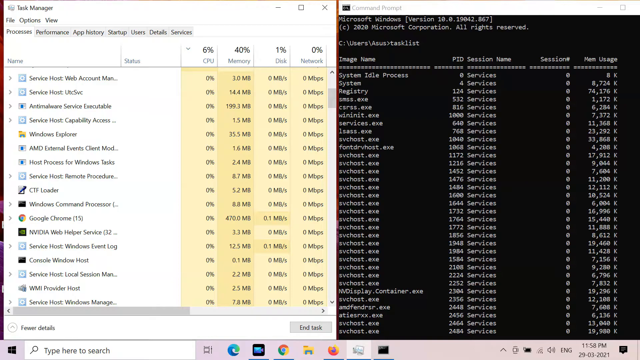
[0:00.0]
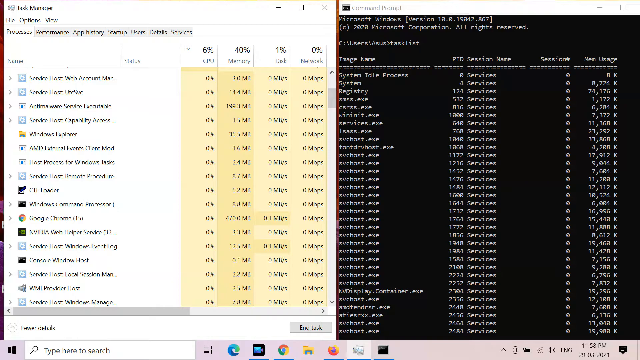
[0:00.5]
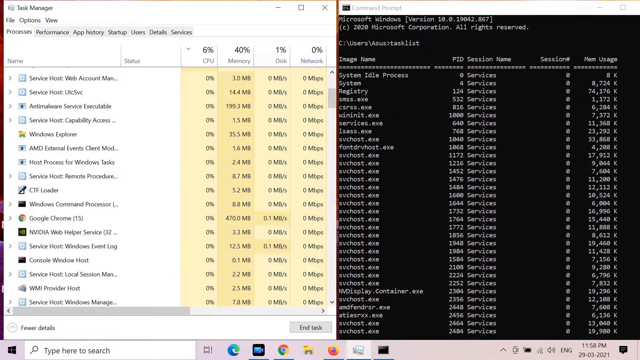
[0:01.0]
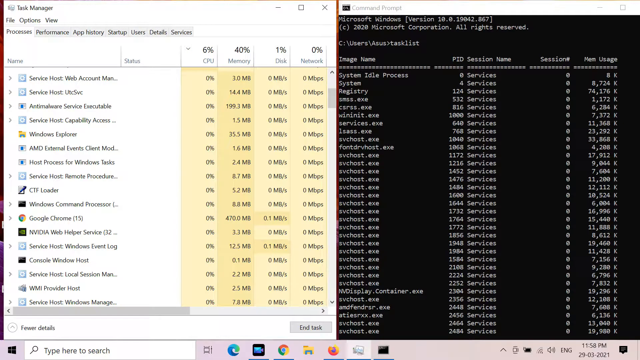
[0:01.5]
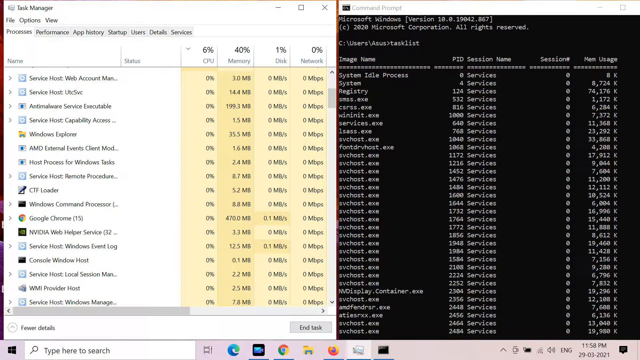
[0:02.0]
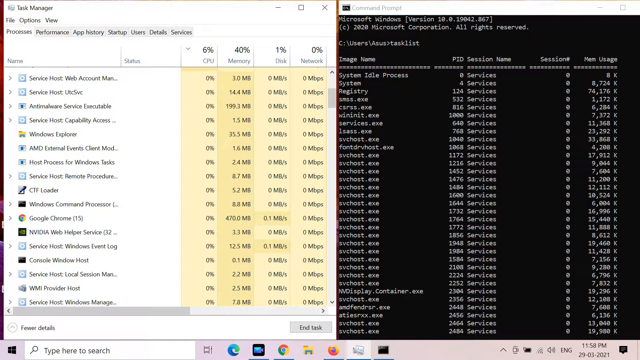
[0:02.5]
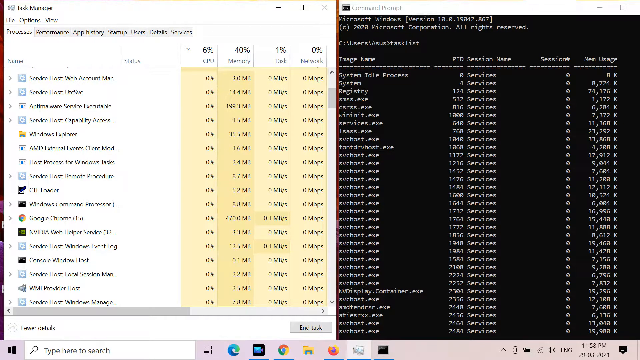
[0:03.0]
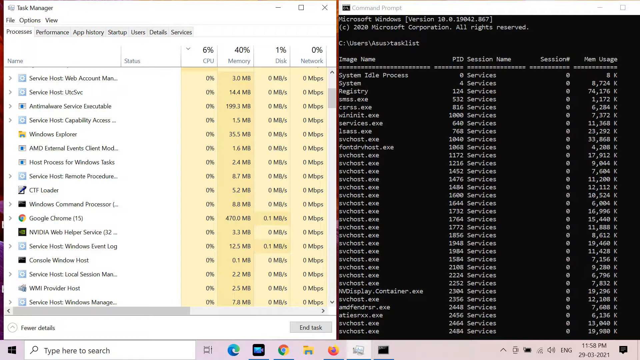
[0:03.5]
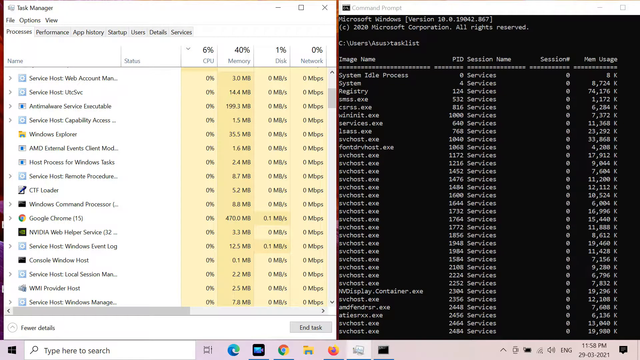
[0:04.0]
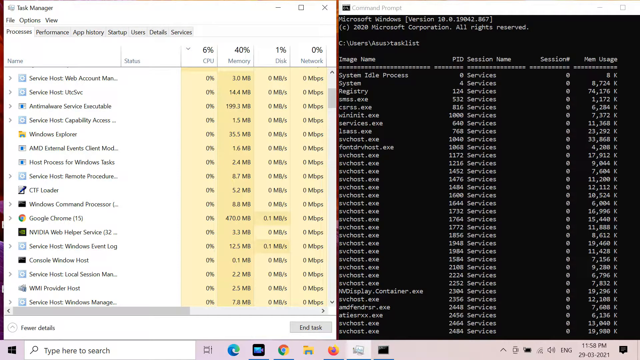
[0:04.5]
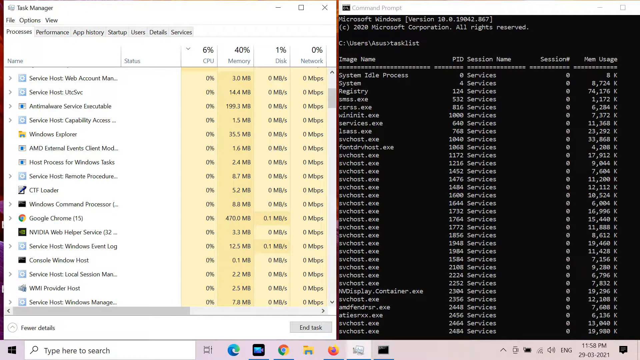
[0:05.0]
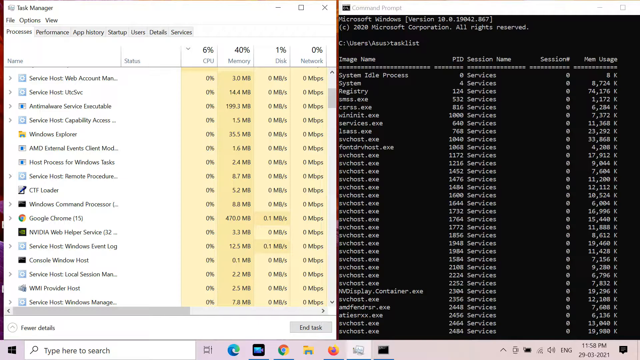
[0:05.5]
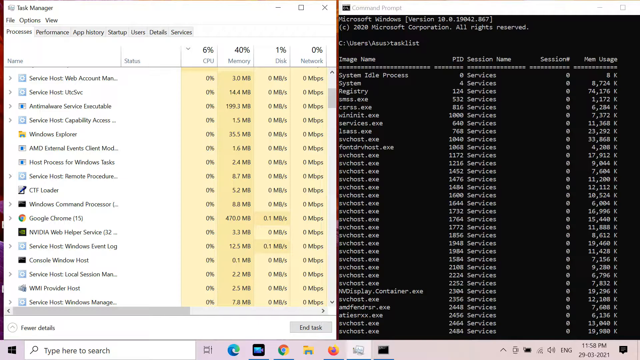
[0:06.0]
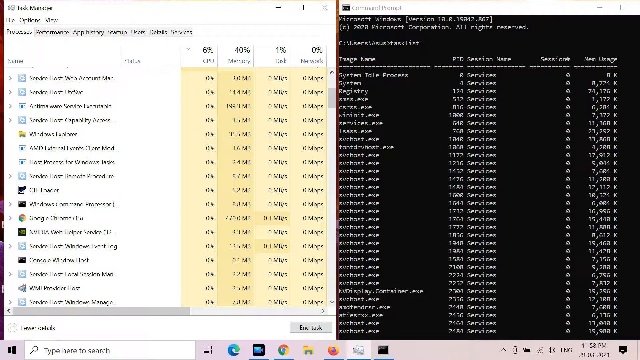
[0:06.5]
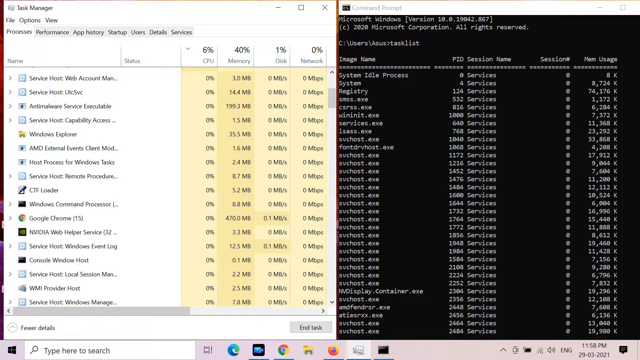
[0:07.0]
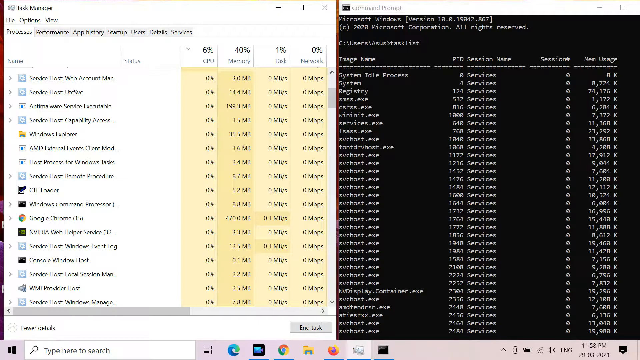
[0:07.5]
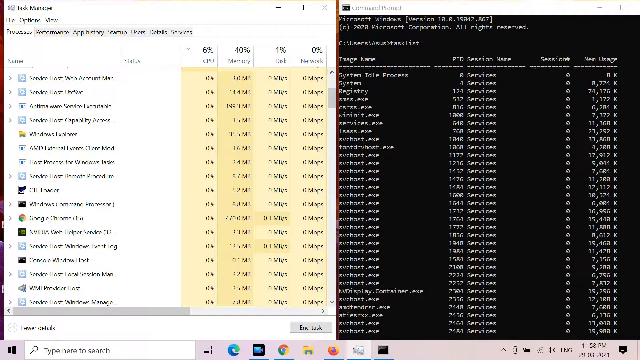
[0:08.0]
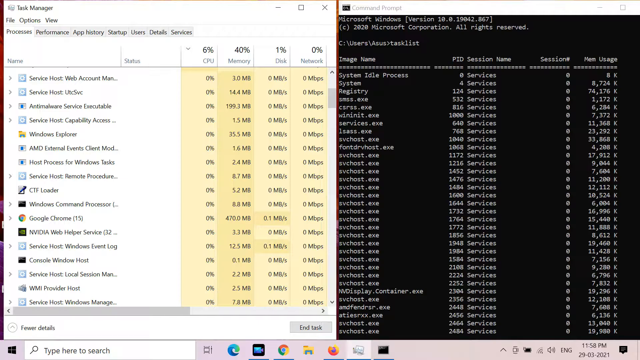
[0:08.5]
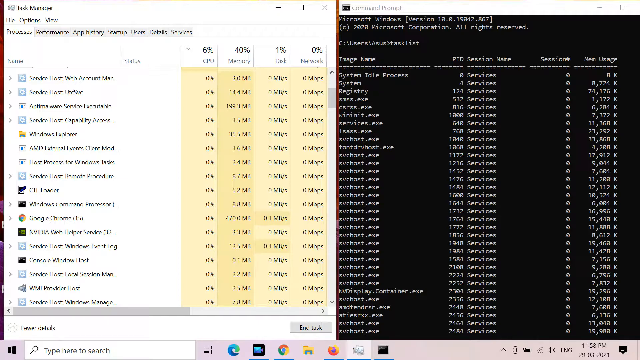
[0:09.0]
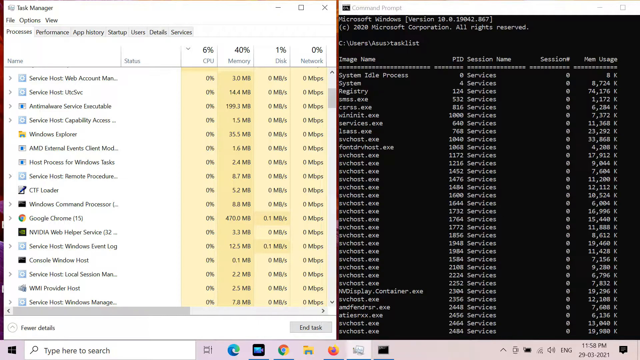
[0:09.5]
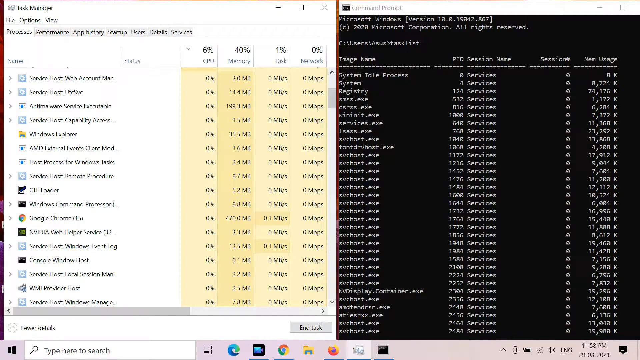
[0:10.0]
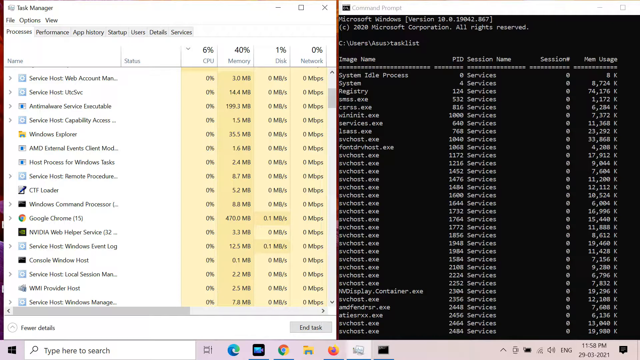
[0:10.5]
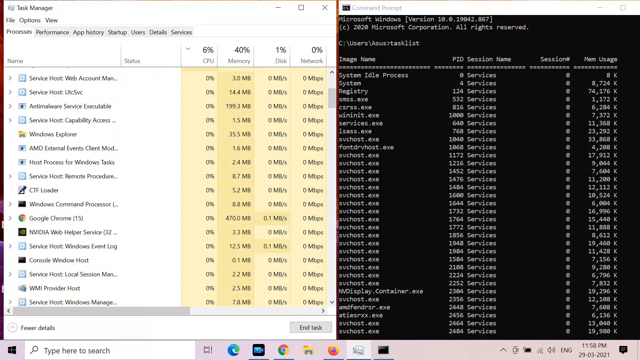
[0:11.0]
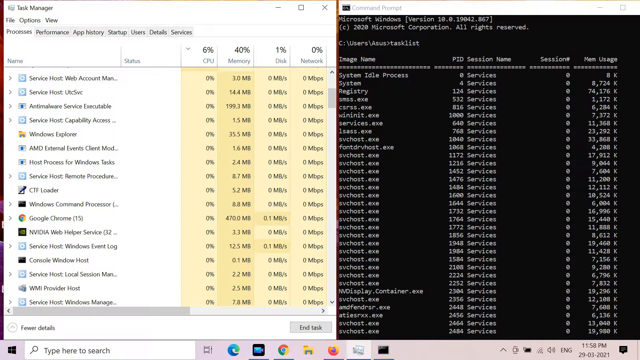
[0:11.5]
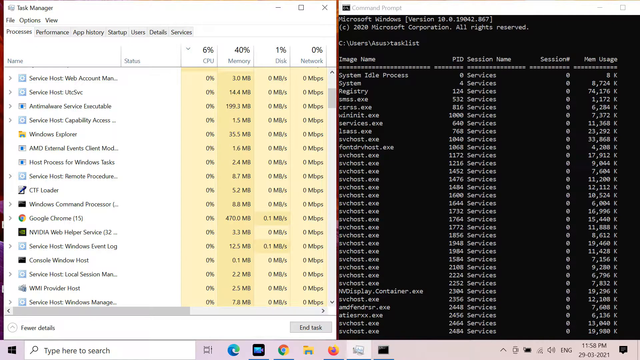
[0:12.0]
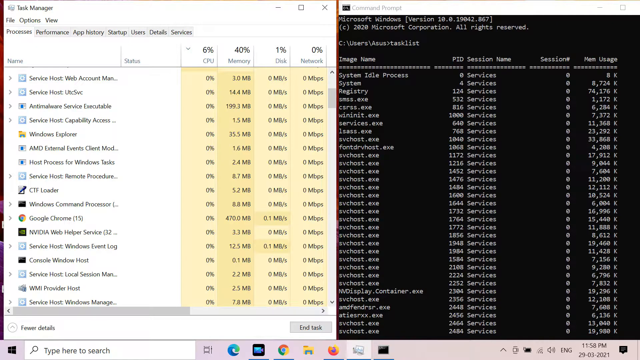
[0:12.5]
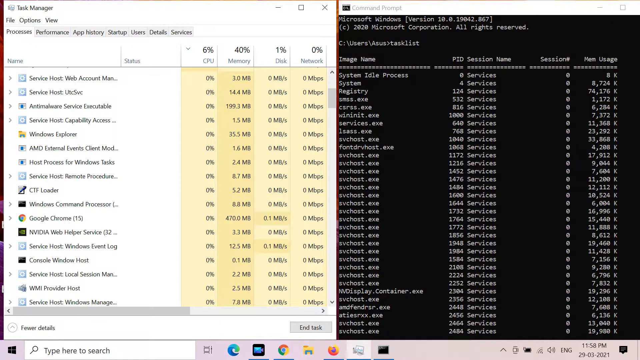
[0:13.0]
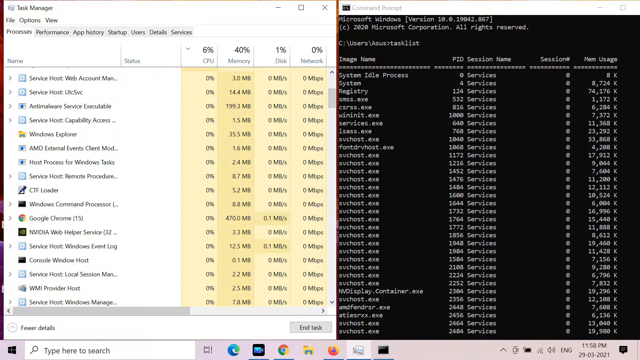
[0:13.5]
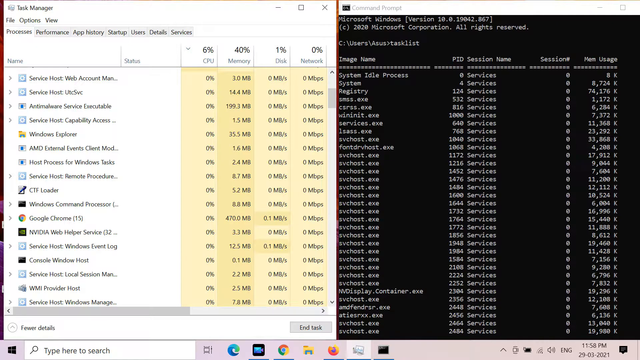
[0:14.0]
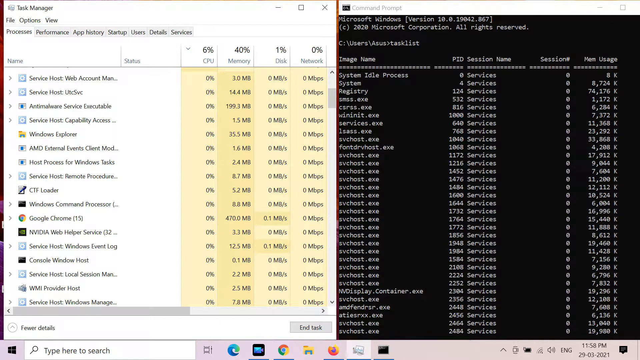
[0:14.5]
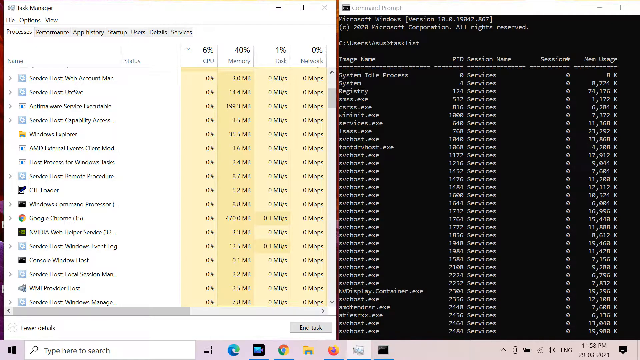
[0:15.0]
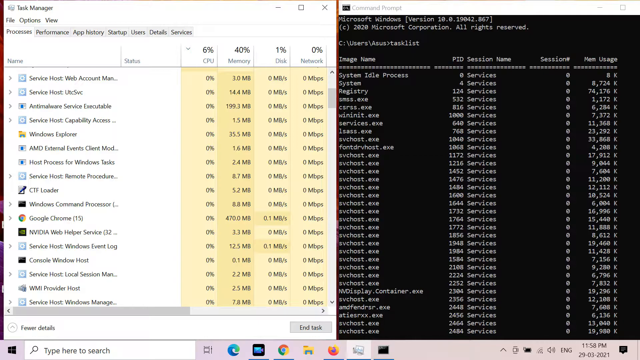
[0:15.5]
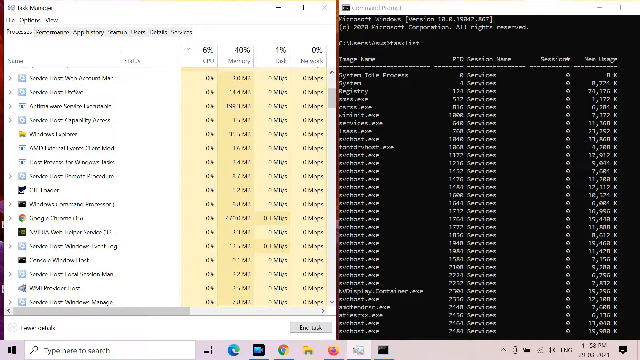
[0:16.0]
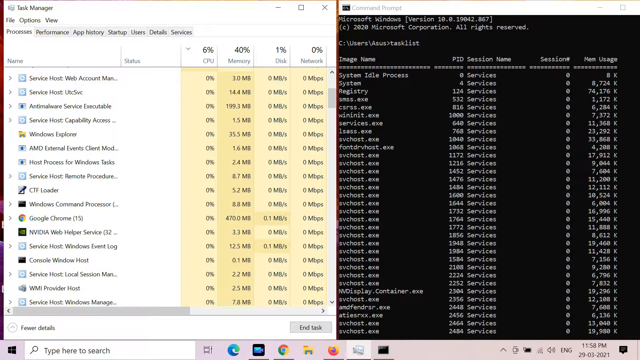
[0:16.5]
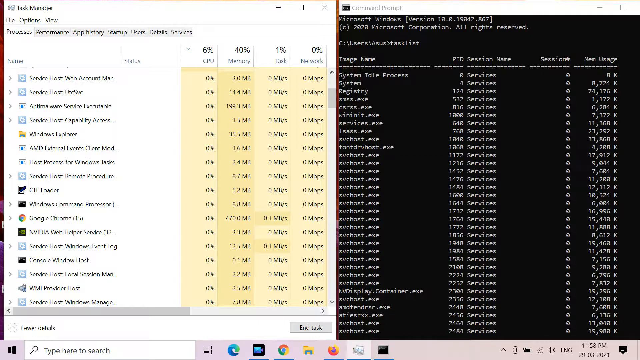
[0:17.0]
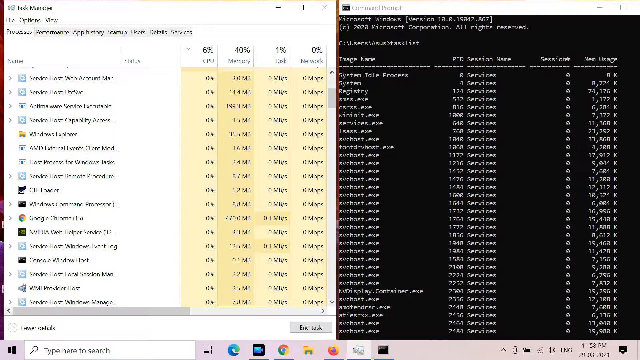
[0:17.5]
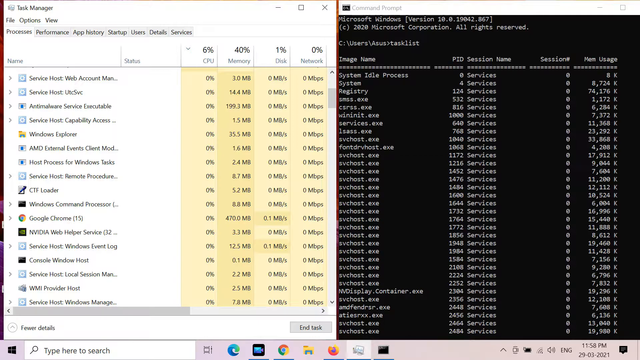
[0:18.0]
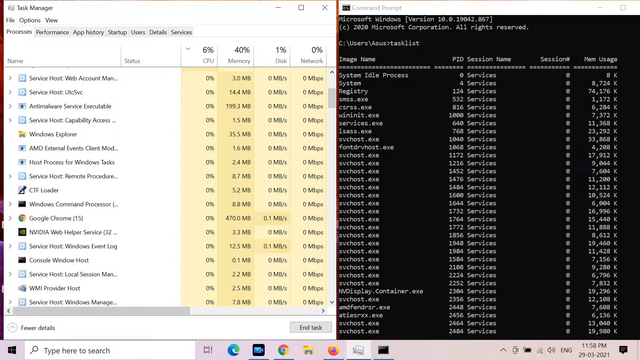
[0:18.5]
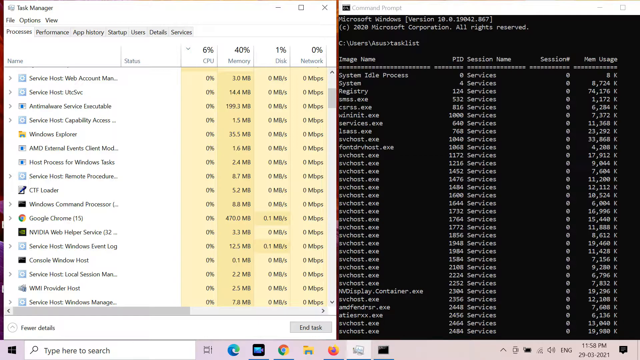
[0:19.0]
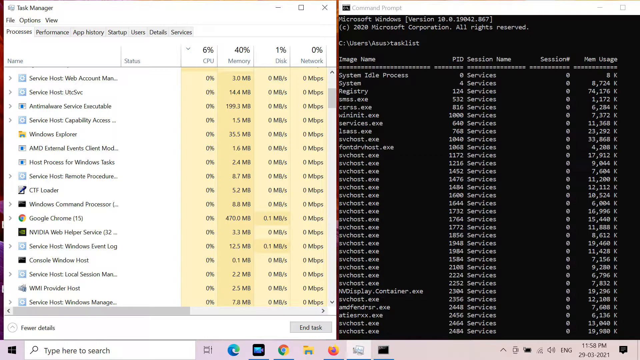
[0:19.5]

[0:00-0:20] The screen is divided into two halves. On the left is the Windows Task Manager, with tabs at the top labeled "Processes", "Performance", "App History", "Startup Users", "Details" and "Services", and the tasks listed with CPU, memory, disk and network values. The right half shows a command prompt version of the task list from the same computer, listing memory usage, session number, PID, session name and image name for the tasks. The two sides seemingly present the same information side by side, one in the Windows UI and one in a text-based command prompt.